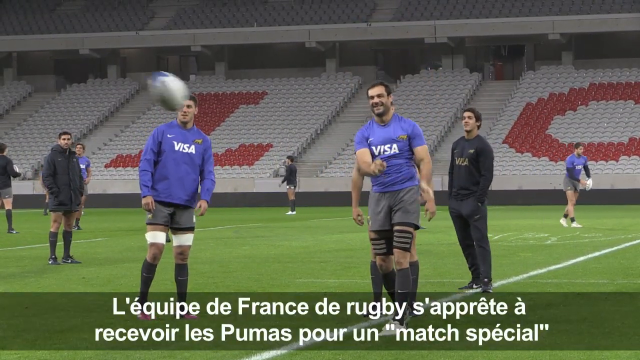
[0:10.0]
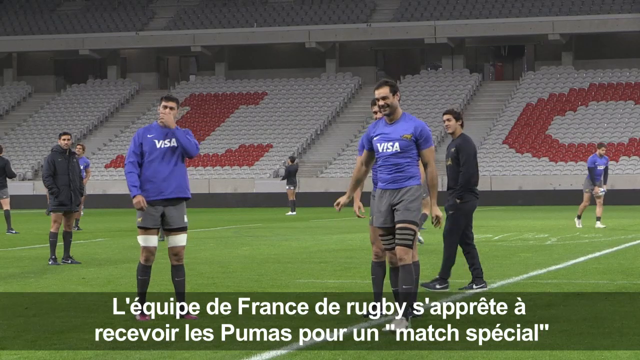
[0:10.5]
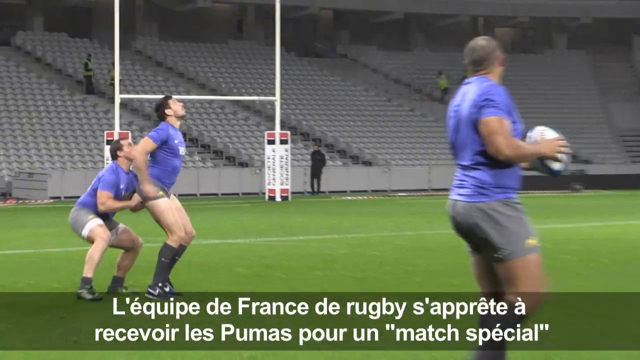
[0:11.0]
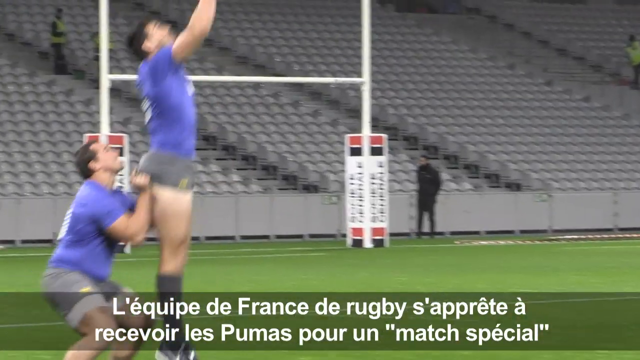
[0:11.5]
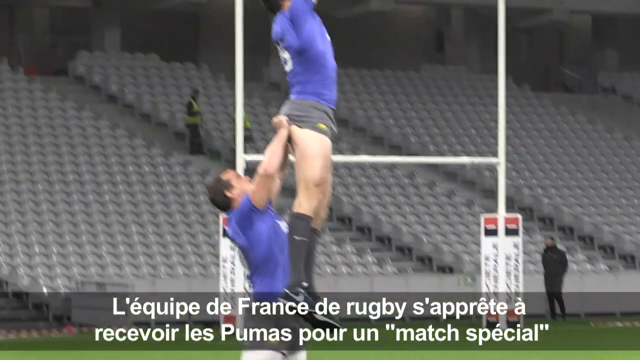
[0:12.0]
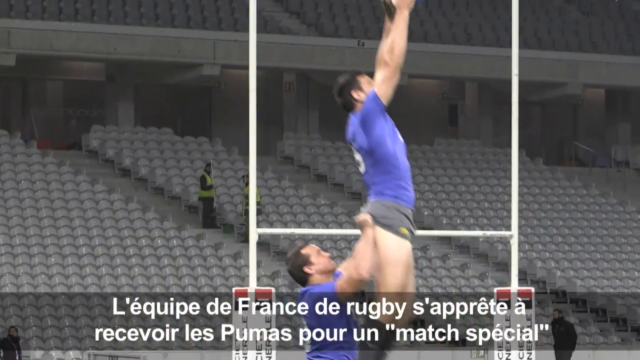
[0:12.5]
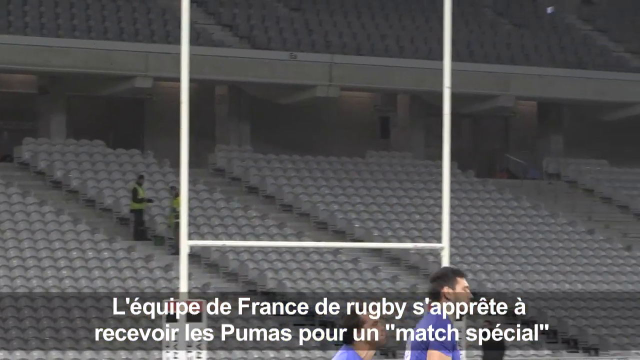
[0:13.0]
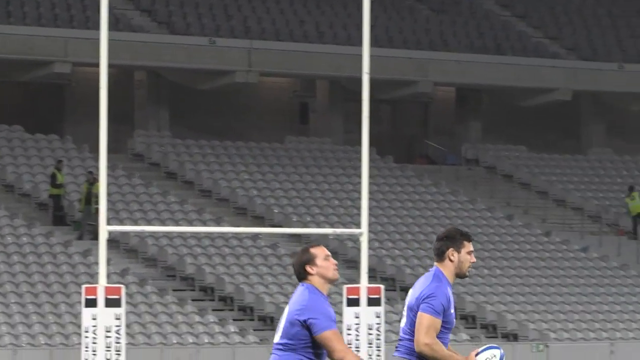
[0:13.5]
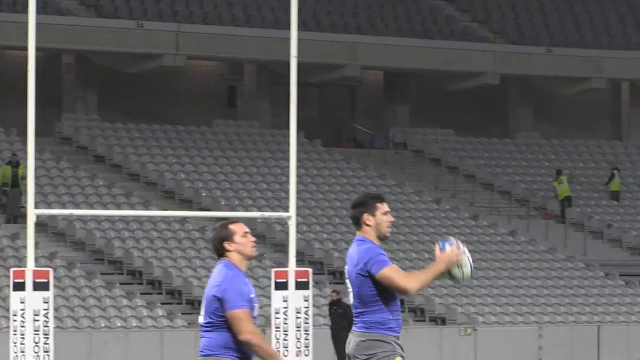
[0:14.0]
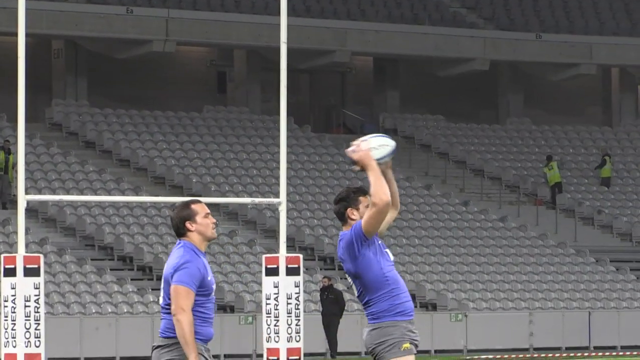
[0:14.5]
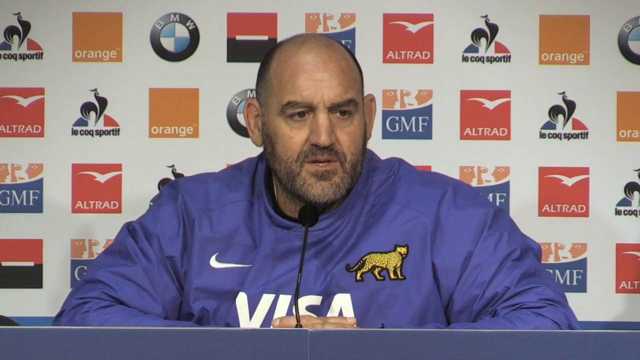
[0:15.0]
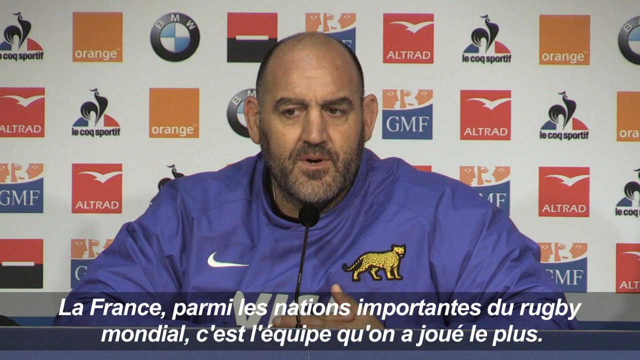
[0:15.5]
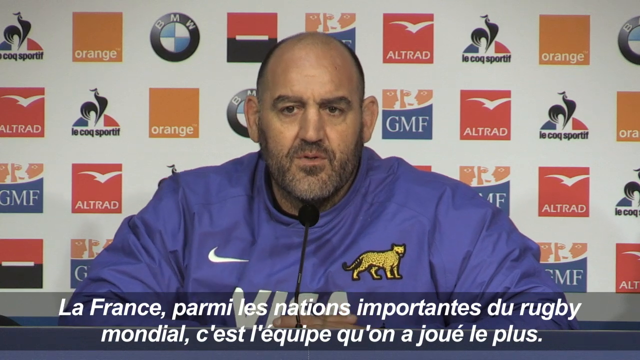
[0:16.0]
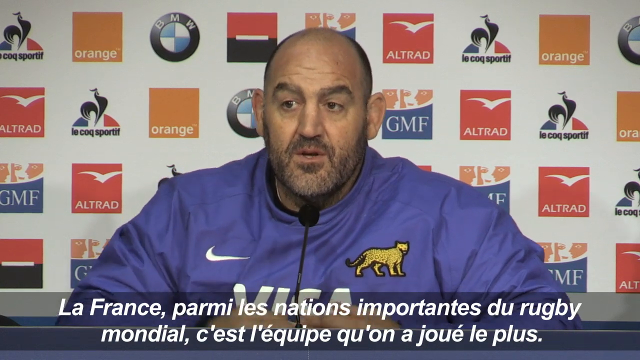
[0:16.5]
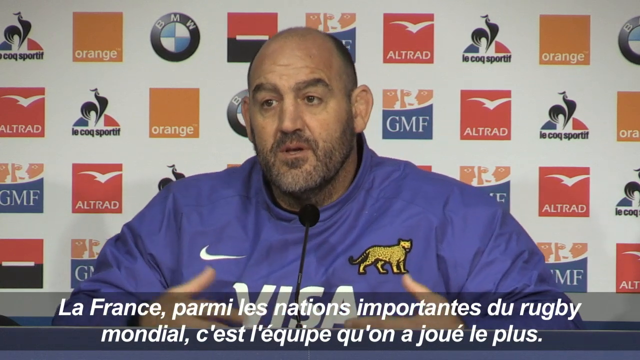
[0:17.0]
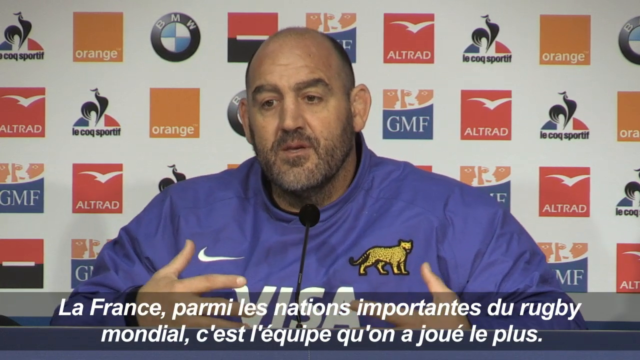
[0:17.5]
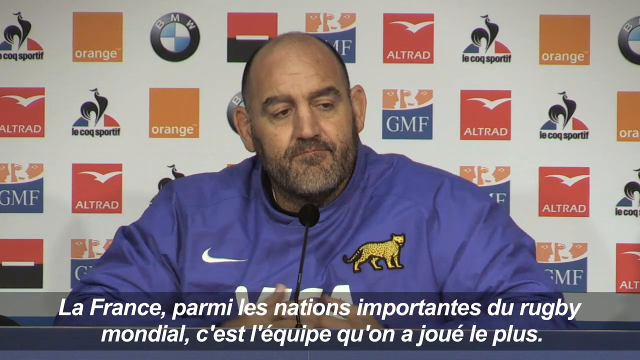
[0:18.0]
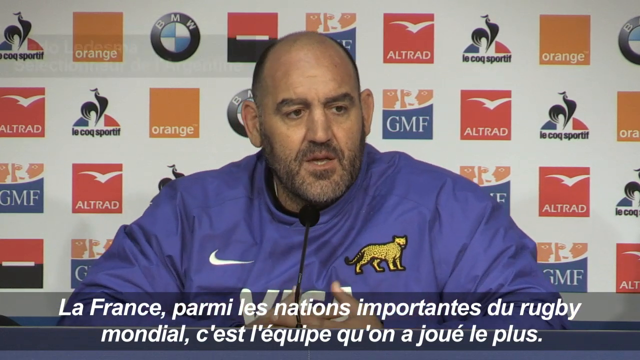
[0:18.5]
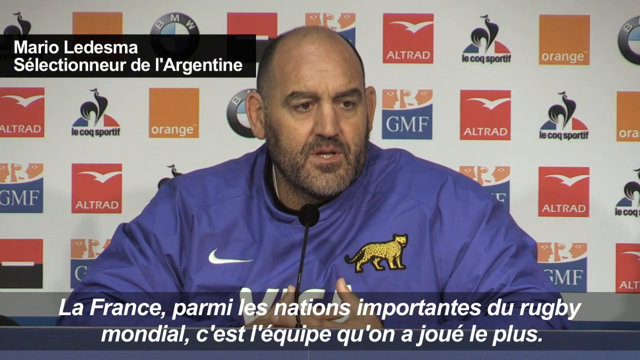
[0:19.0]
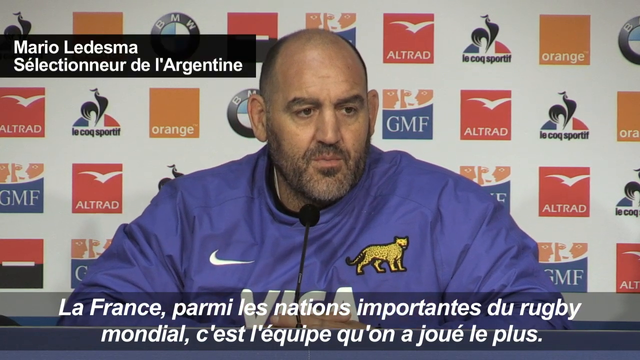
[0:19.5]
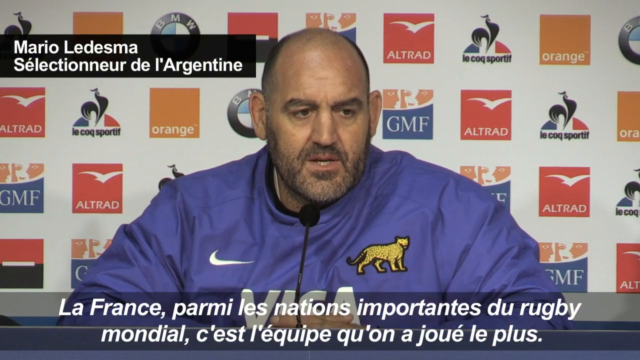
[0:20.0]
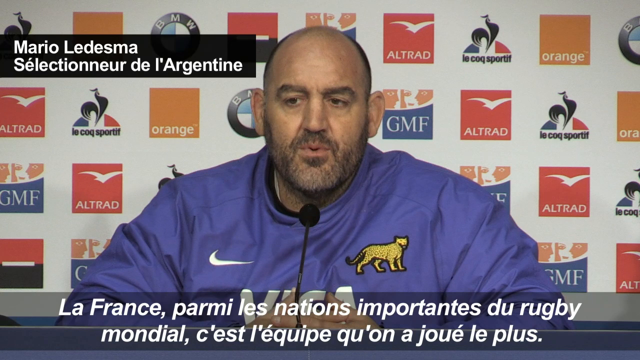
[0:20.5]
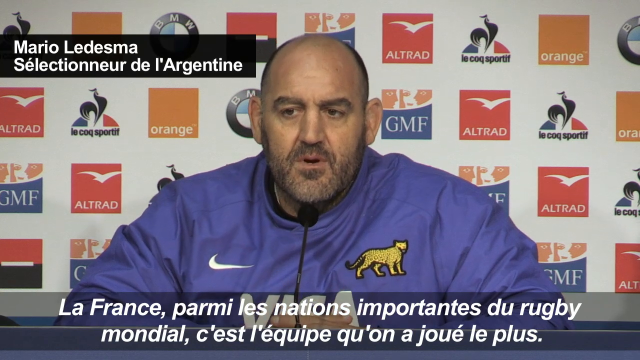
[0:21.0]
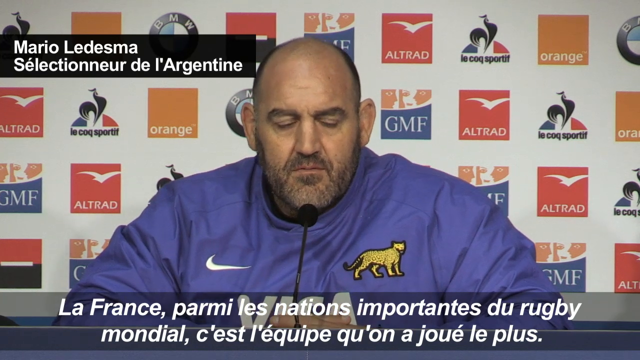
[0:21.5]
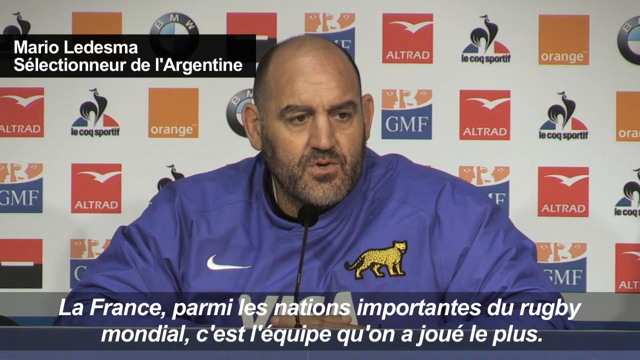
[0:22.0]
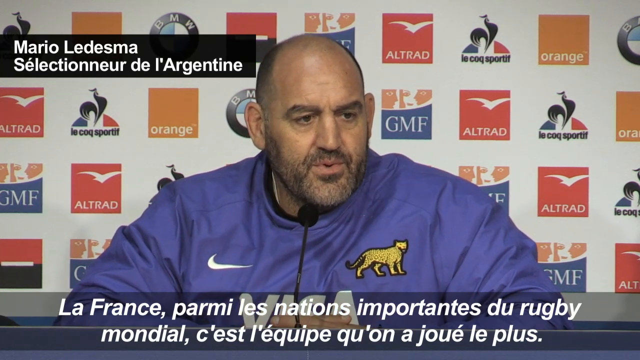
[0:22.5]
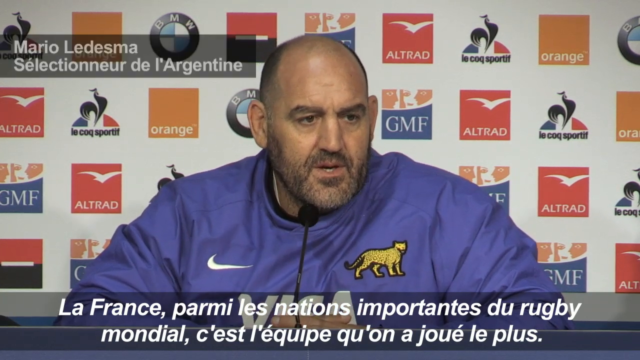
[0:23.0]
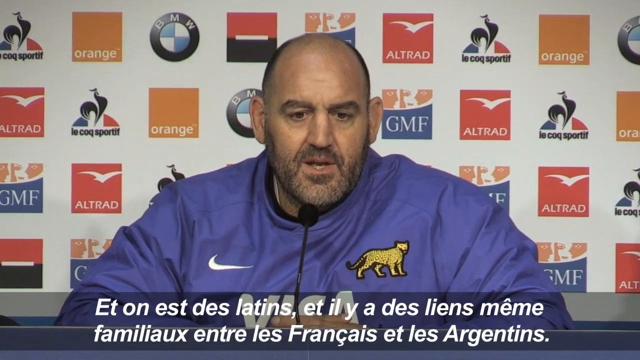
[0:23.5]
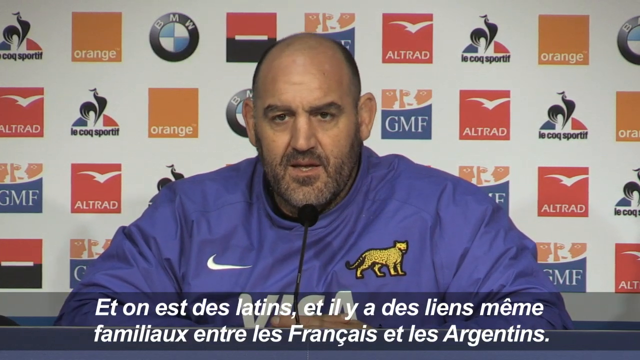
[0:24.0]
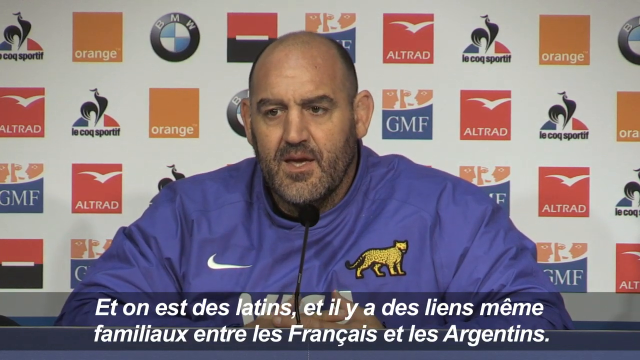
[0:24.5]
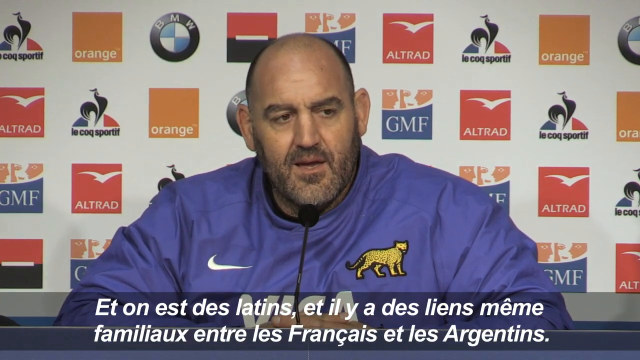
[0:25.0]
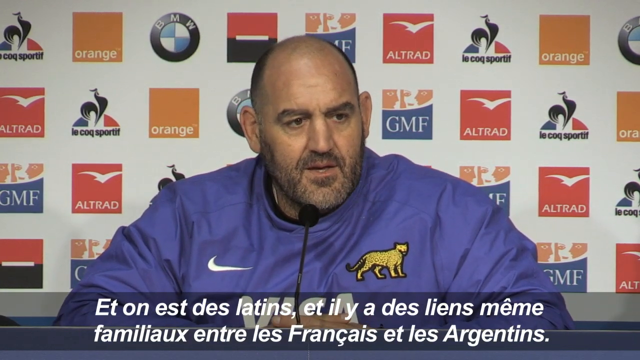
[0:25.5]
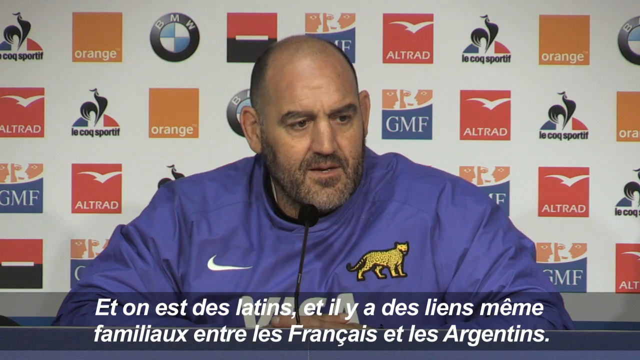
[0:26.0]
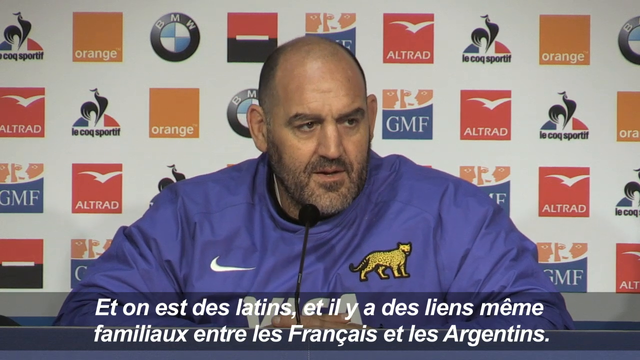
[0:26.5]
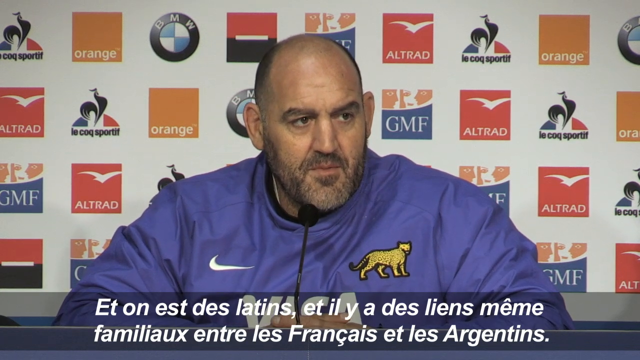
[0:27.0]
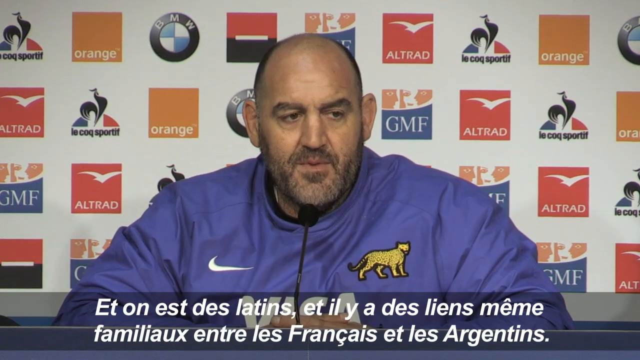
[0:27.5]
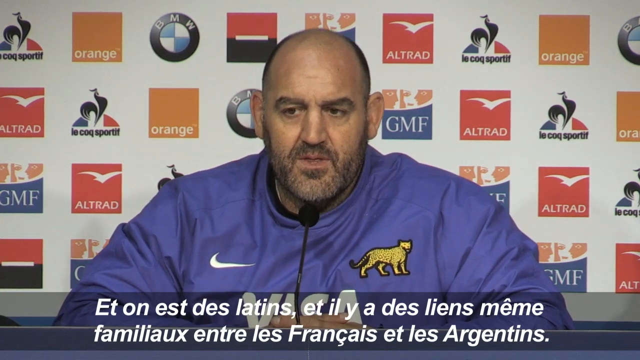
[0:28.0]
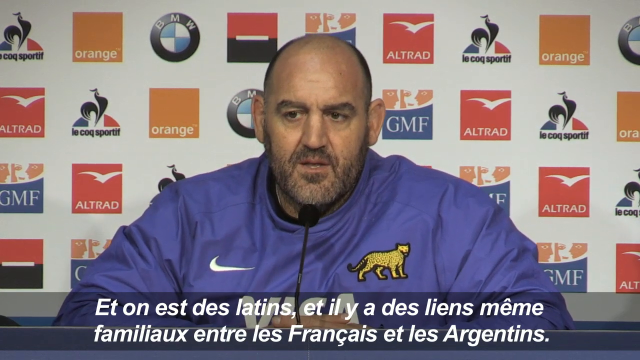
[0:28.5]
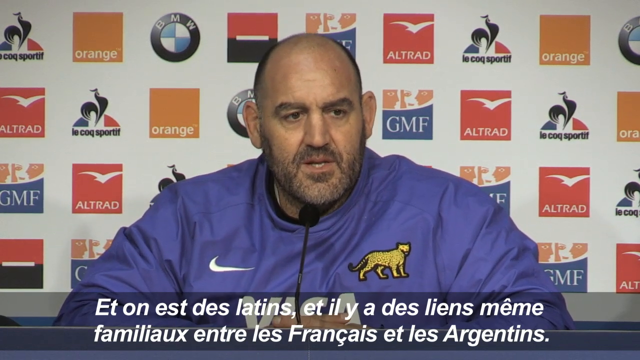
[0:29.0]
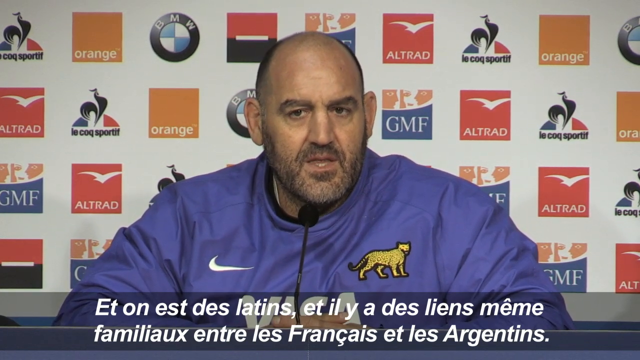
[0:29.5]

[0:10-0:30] A subtitle in French appears that refers to France and rugby. The practice continues, and a goal post is visible behind a man, showing that this is rugby. The coach then appears, wearing a blue windbreaker with a leopard over his left breast and the Nike symbol over his right. He is about 51 years old, with a somewhat unkempt black beard, and most of his head is shaved. A host of advertisers appear on the wall behind him: GMF, Altrad, Le Coq Sportif, Orange, Altrad again, and others. As he speaks to the press, he makes a shrug. He is identified as Mario Ledesma, "Seleccionar de l'Argentine". He seems in complete control of himself as he speaks to the unseen press.